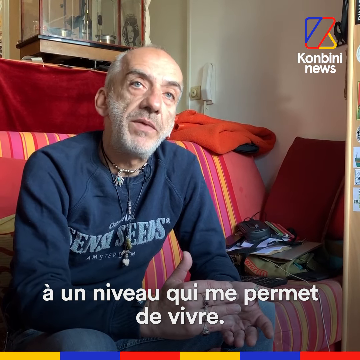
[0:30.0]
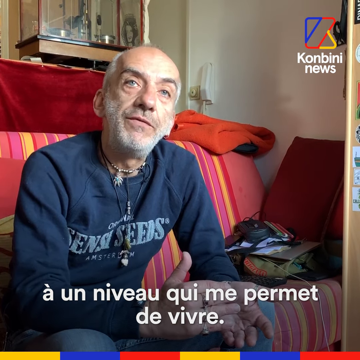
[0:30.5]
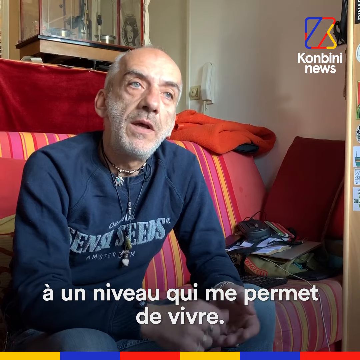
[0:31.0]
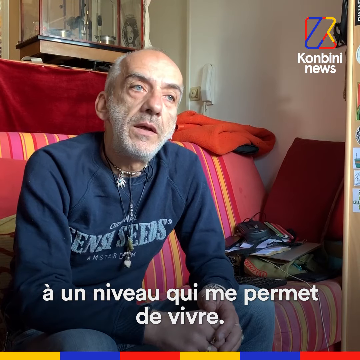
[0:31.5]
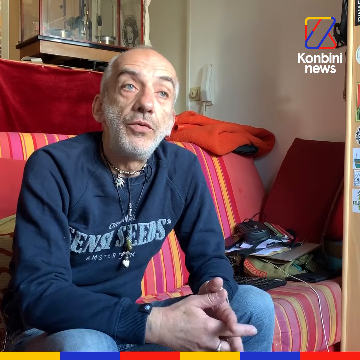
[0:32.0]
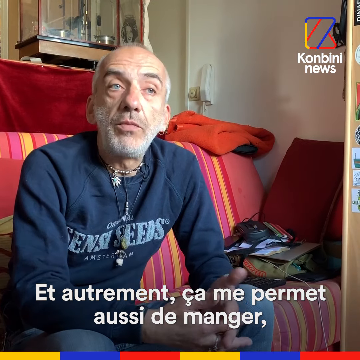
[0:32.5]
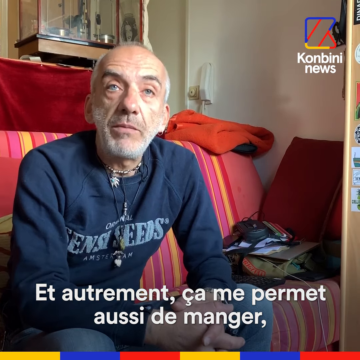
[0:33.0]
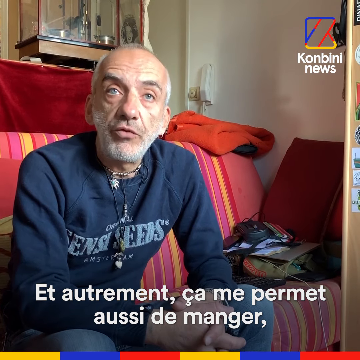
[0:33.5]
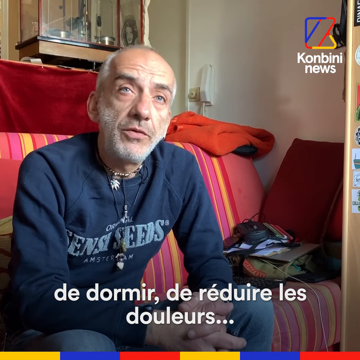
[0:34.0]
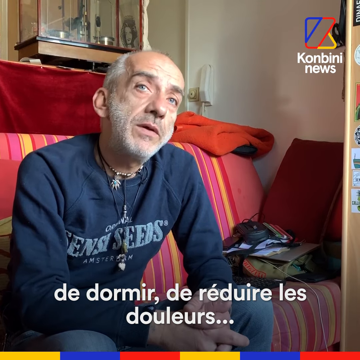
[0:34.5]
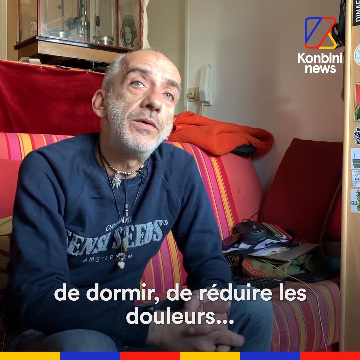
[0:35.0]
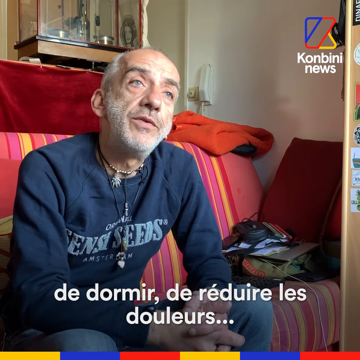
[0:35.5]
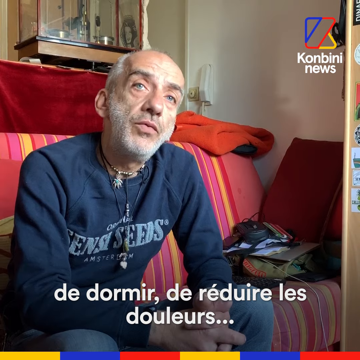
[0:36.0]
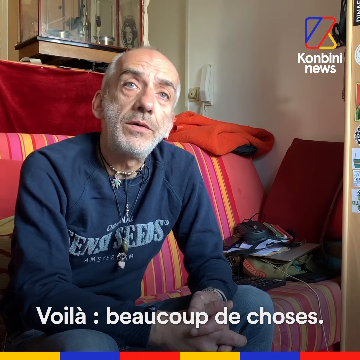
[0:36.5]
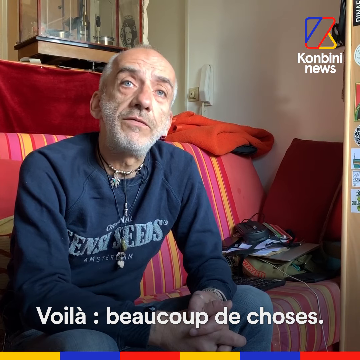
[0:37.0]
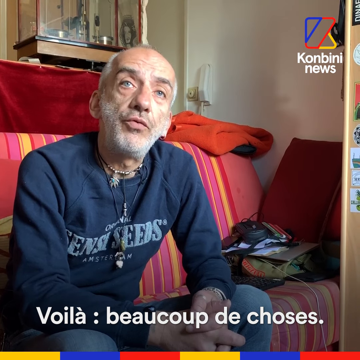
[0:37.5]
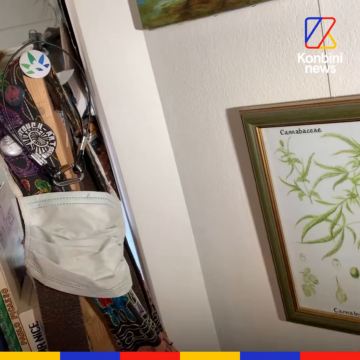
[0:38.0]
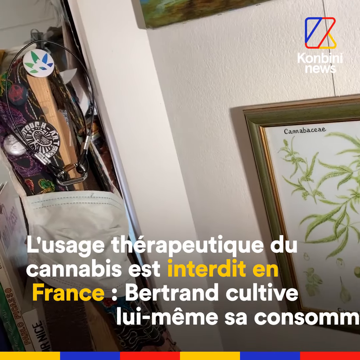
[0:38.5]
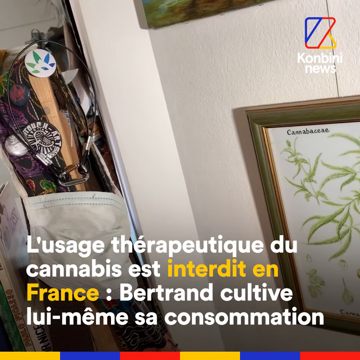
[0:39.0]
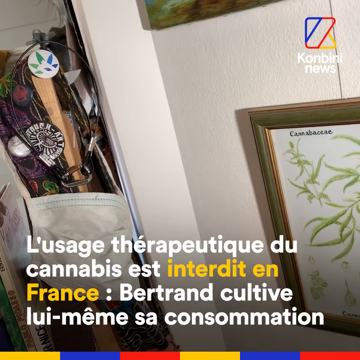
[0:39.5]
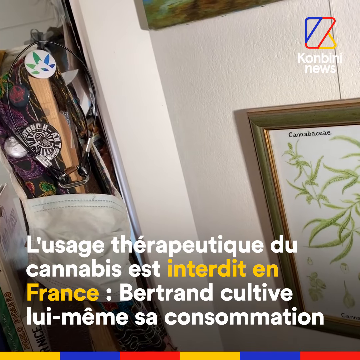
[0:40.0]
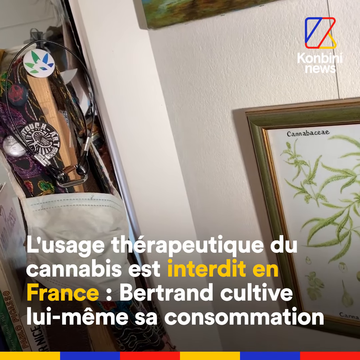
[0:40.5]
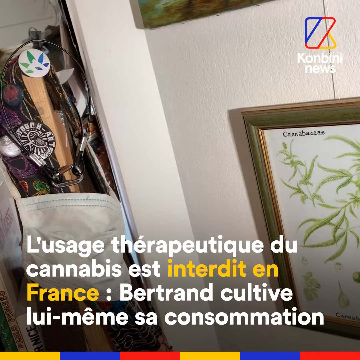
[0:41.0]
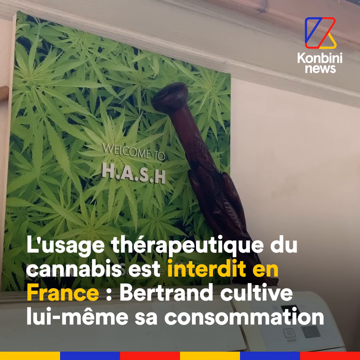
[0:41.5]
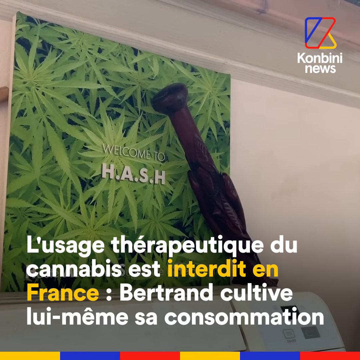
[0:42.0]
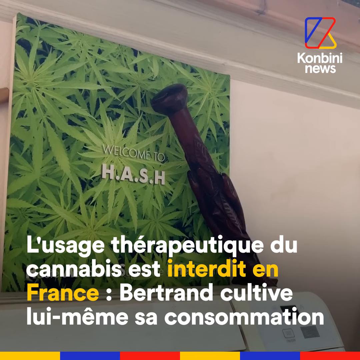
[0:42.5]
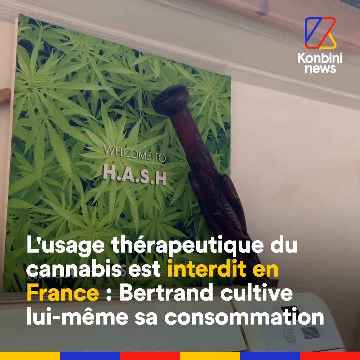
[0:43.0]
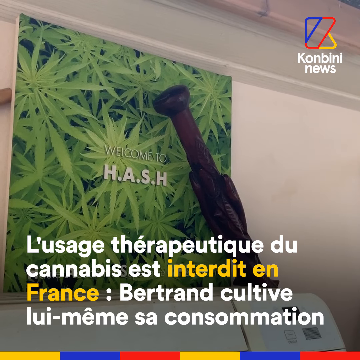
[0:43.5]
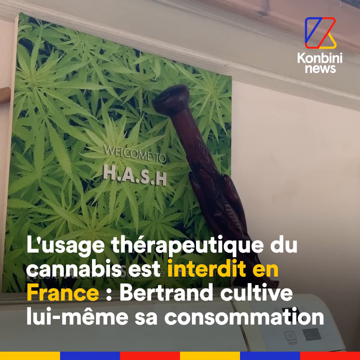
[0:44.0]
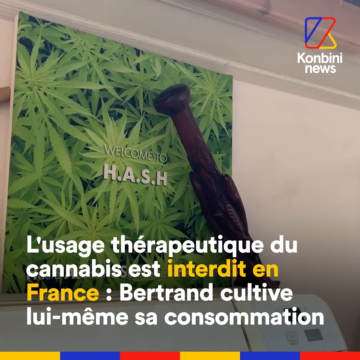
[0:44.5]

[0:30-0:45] The man is still sitting on the same sofa, talking with his hands folded. Type appears in white and yellow. A marijuana poster is on his wall, showing pictures of a marijuana plant and reading "welcome" and then "hash". His surroundings are shown; he seems very relaxed. He has light blue eyes. Pictures are on the wall, some framed and some just attached to the wall. He wears several necklaces, apparently about three. The corner of a room is shown where there is a bunch of stuff in a closet, hard to make out. The same Konbini logos are in the same places, with the same colored dashes at the very bottom of the screen. The light is natural, coming in from the right-hand side. The man seems very relaxed and talks very casually, like a casual conversation.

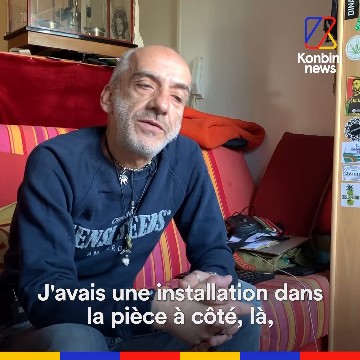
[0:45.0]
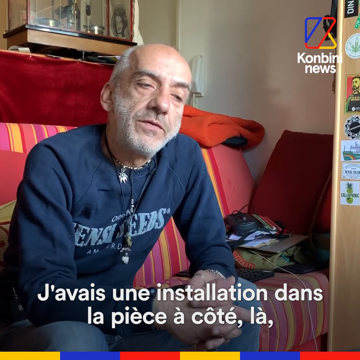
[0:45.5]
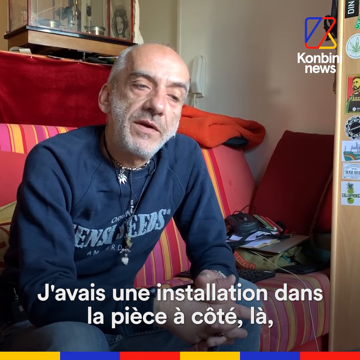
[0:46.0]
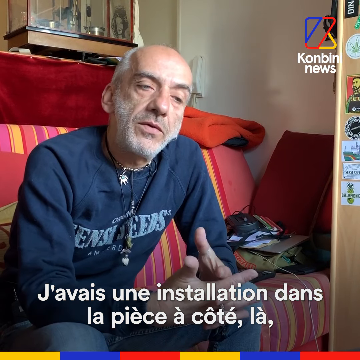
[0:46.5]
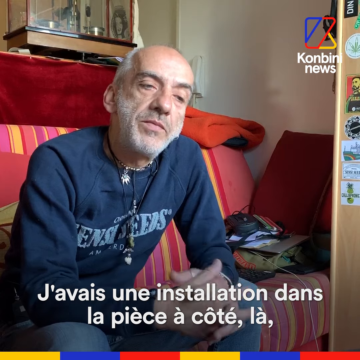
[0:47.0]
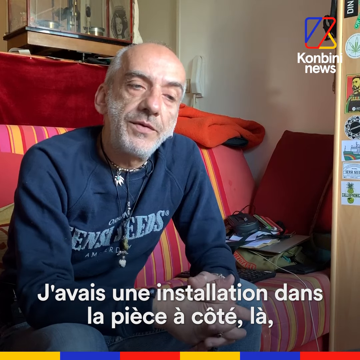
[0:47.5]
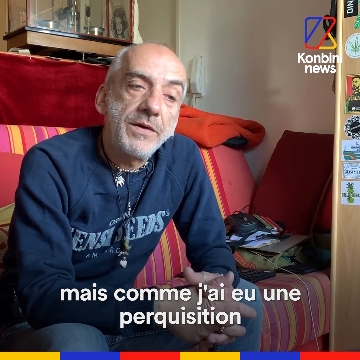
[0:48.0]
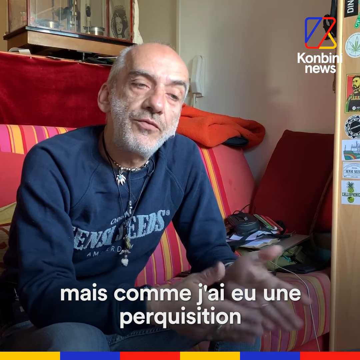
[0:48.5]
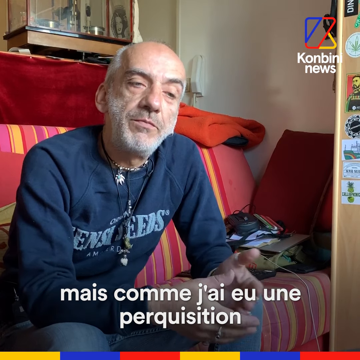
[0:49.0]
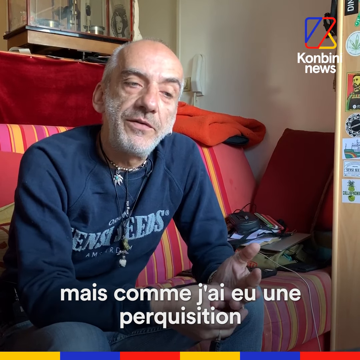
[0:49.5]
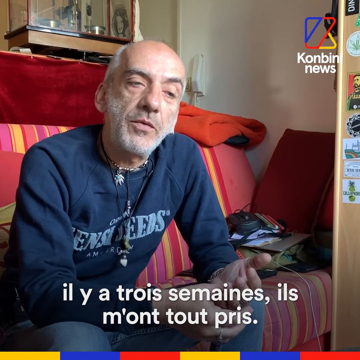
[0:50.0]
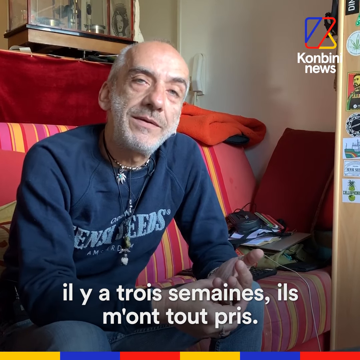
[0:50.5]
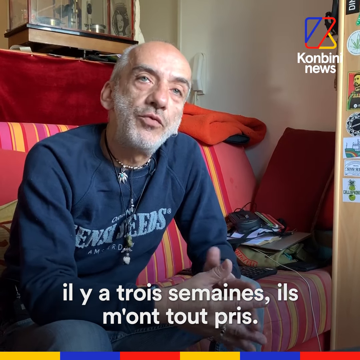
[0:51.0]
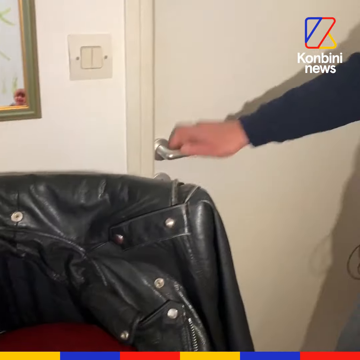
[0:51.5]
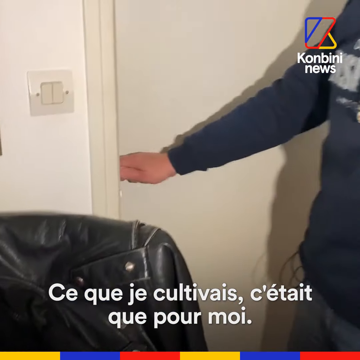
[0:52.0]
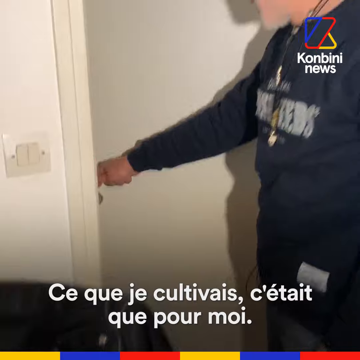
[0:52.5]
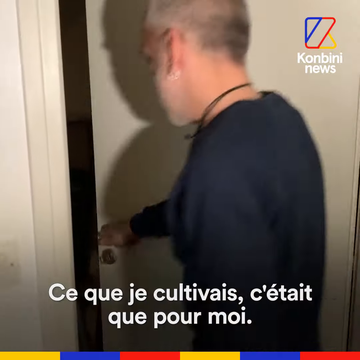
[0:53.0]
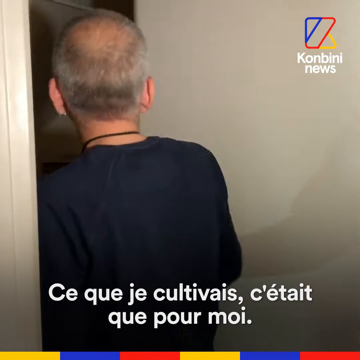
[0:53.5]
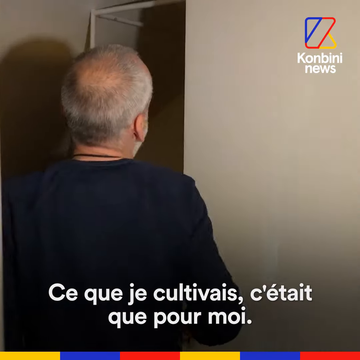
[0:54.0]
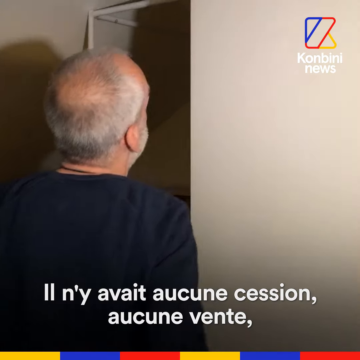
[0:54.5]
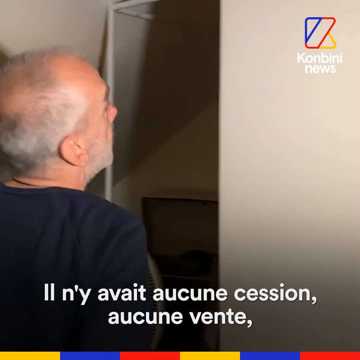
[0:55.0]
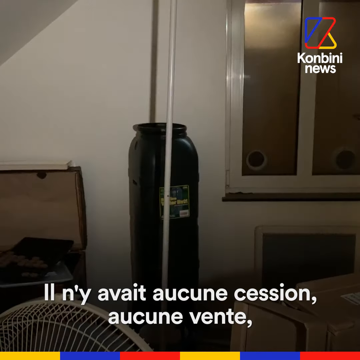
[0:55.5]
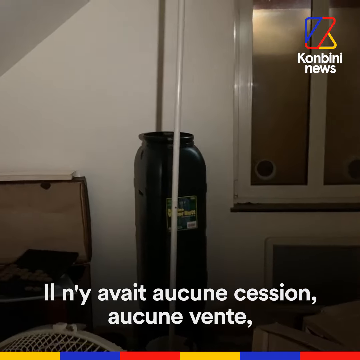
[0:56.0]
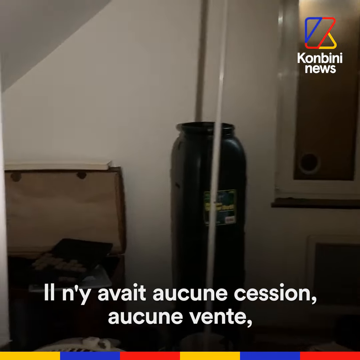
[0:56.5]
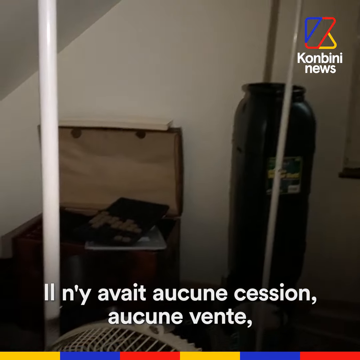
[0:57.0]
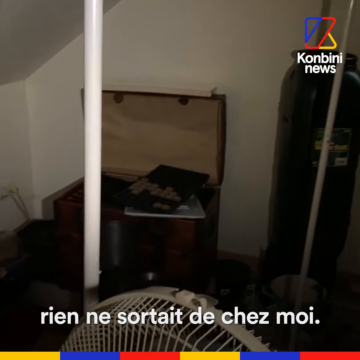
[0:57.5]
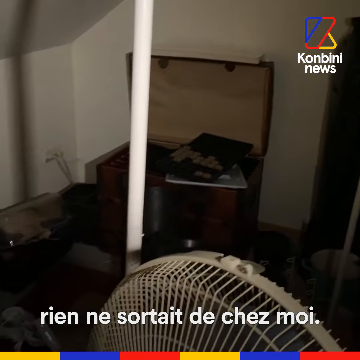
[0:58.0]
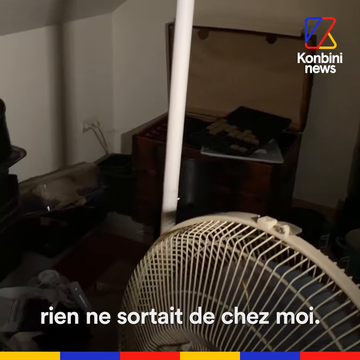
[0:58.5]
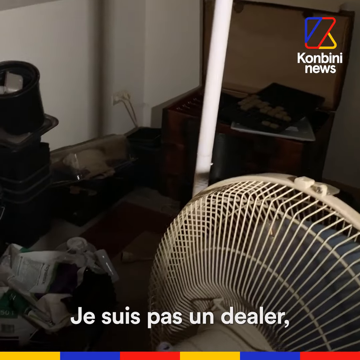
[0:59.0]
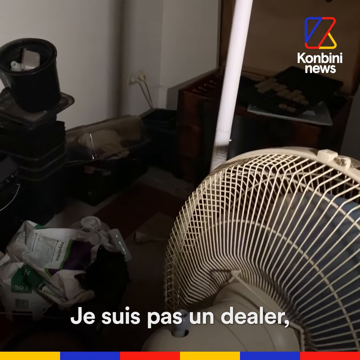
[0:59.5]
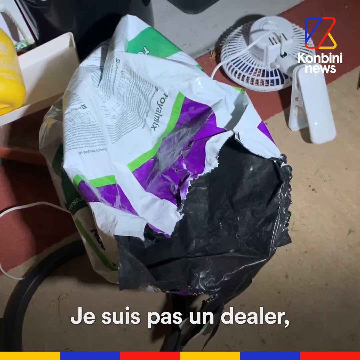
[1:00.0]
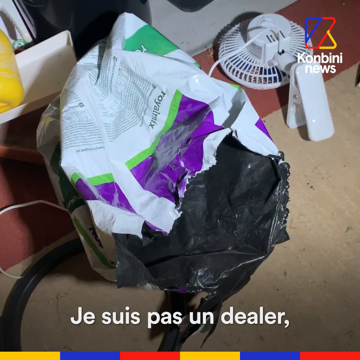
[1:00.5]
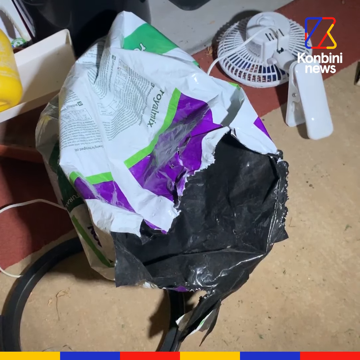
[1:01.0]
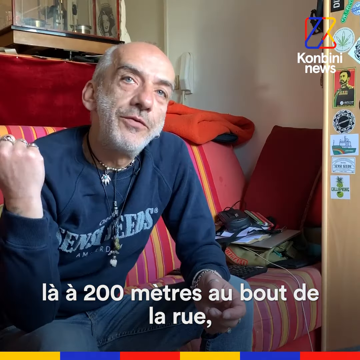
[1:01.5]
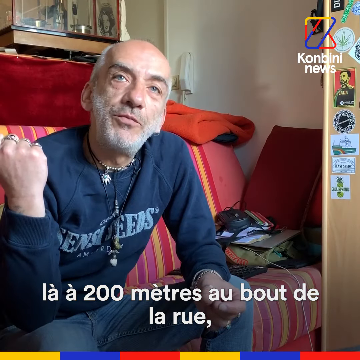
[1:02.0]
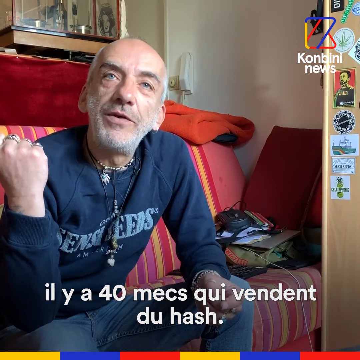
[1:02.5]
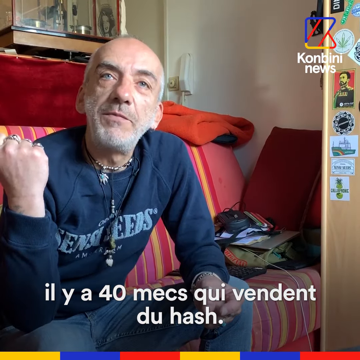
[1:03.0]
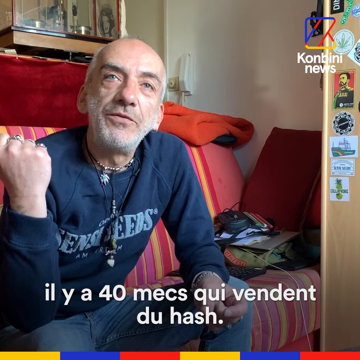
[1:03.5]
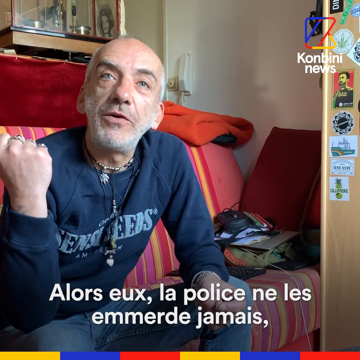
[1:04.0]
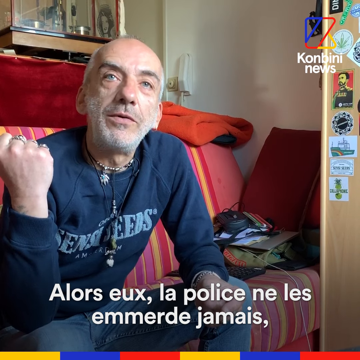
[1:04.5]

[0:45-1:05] The man continues to talk, with very few facial expressions. He opens a door and the camera goes into a room that looks like a storage room or maybe a walk-in closet. A fan and some other items are on the floor. As he enters, a window and a pole can be seen in the room, and there are two white fans. Part of the room is not lit and is very dark. Then the scene is back on the sofa with him talking. The logos are in the same places on the screen. Two black rectangles are on either side of the live part of the video in the center. Text continues across the bottom portion of the screen in white sans-serif type; many of the words have accents and some characters are not English ones, and it looks like it is probably French or Spanish.